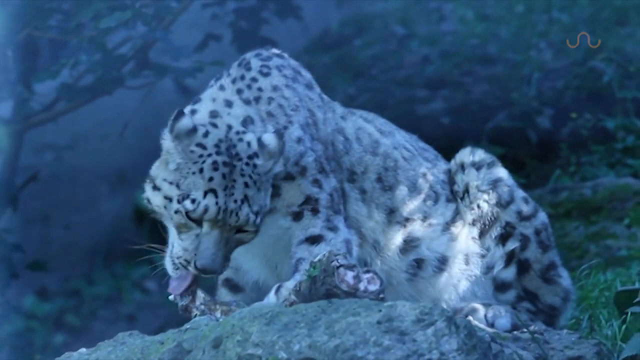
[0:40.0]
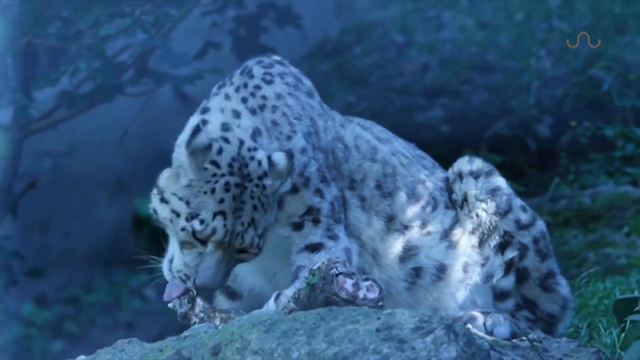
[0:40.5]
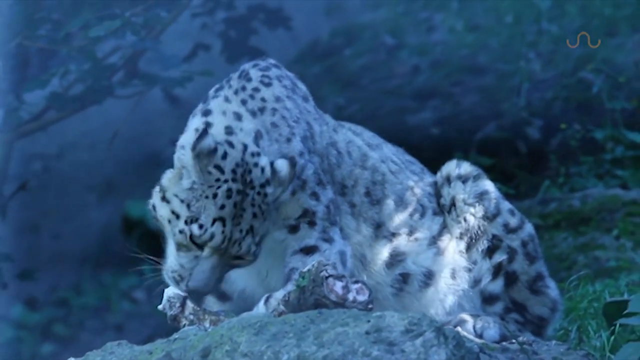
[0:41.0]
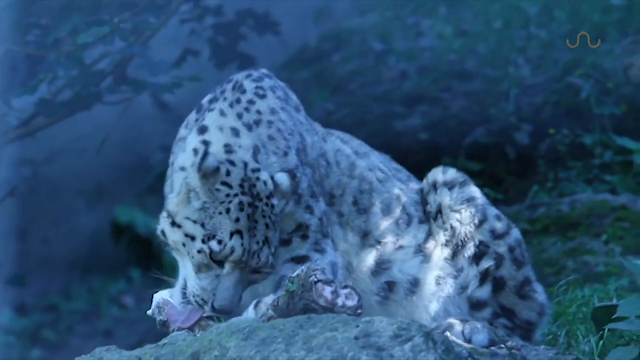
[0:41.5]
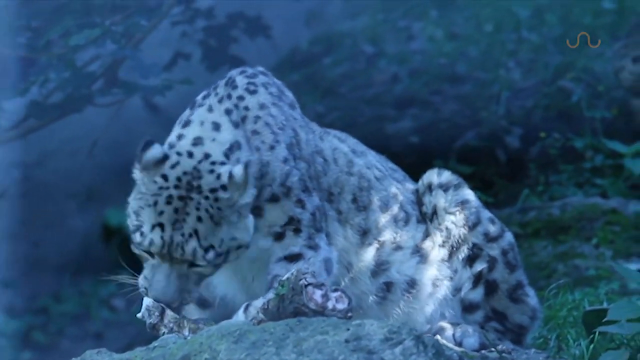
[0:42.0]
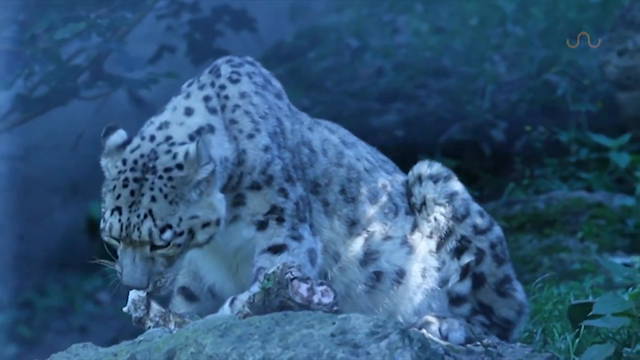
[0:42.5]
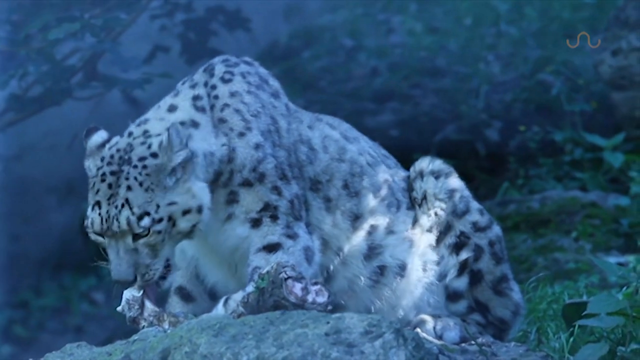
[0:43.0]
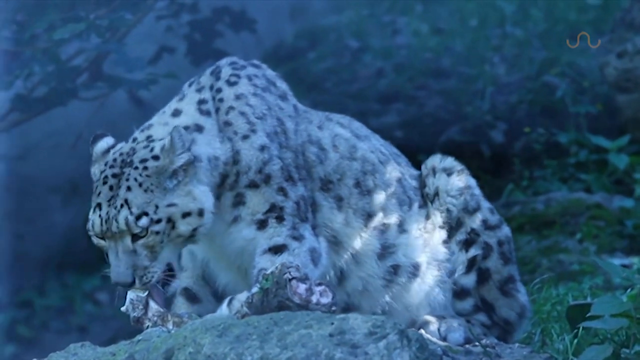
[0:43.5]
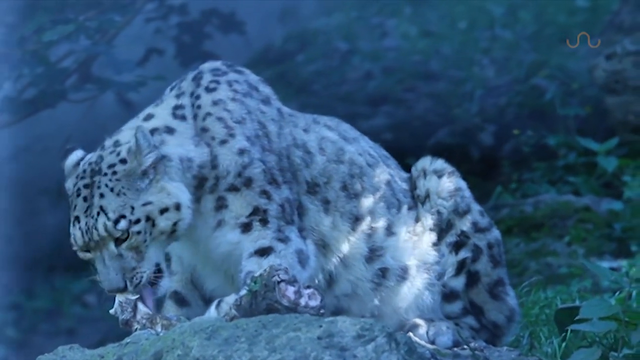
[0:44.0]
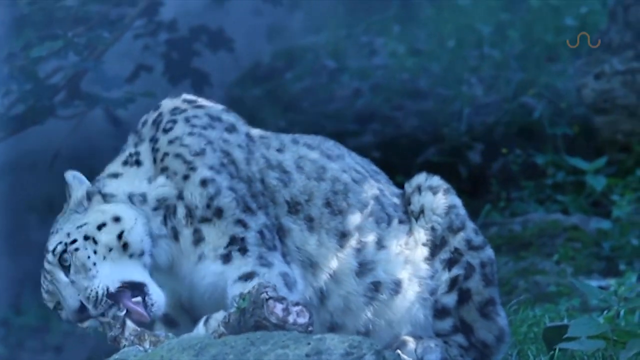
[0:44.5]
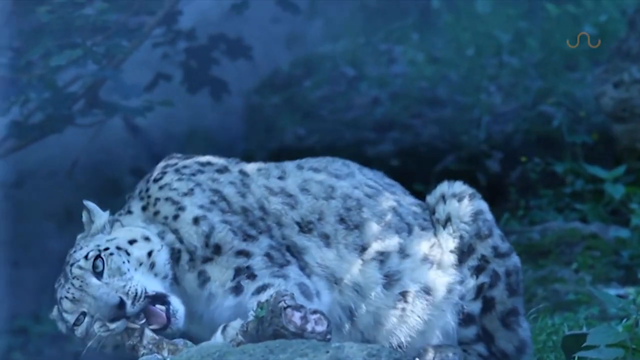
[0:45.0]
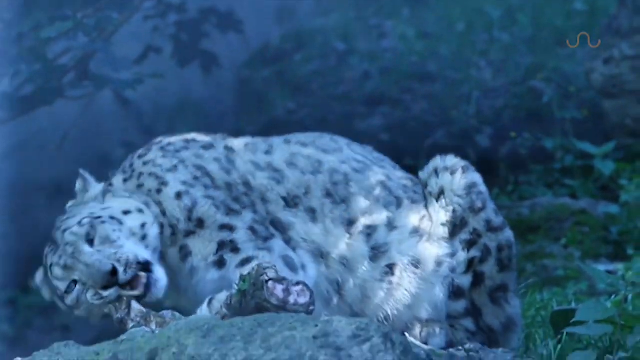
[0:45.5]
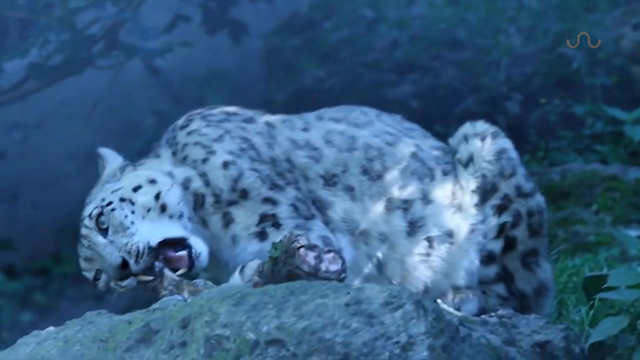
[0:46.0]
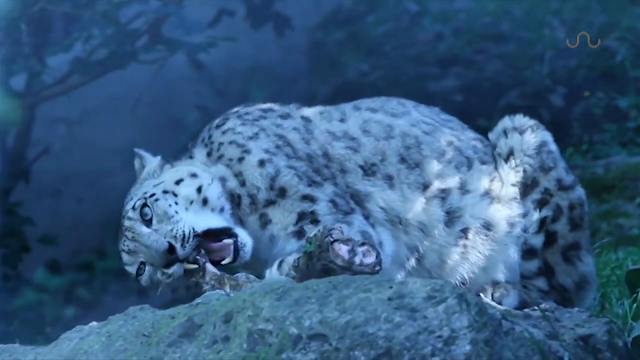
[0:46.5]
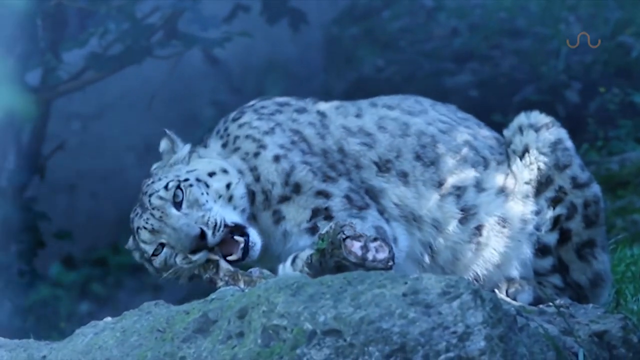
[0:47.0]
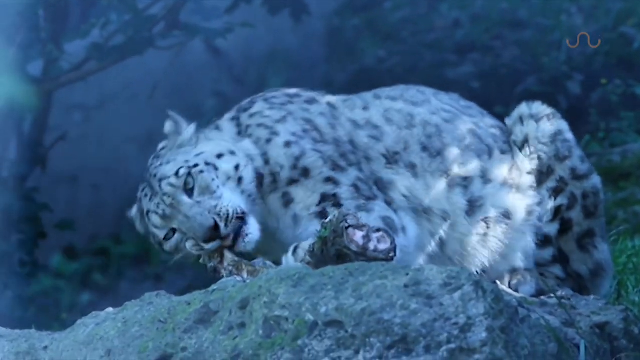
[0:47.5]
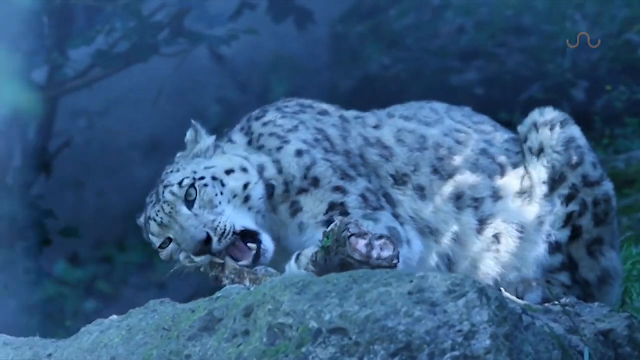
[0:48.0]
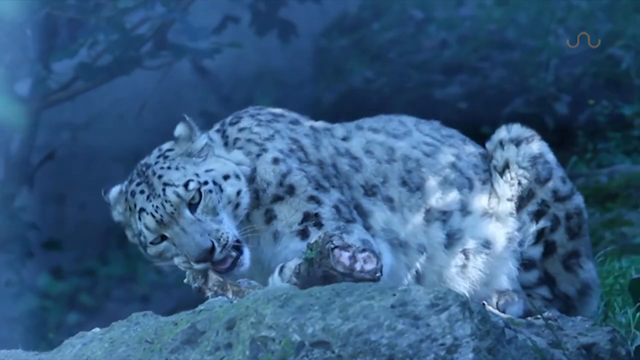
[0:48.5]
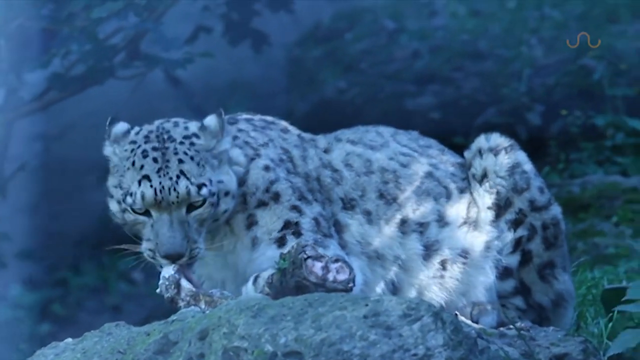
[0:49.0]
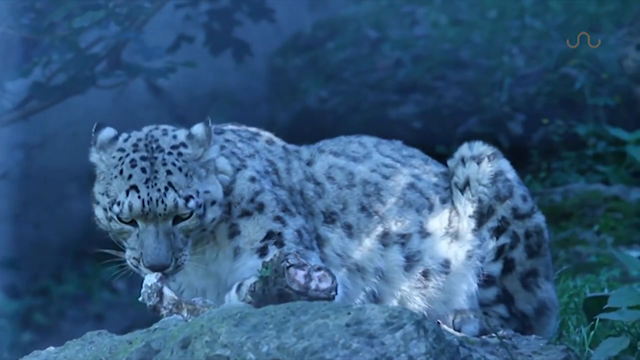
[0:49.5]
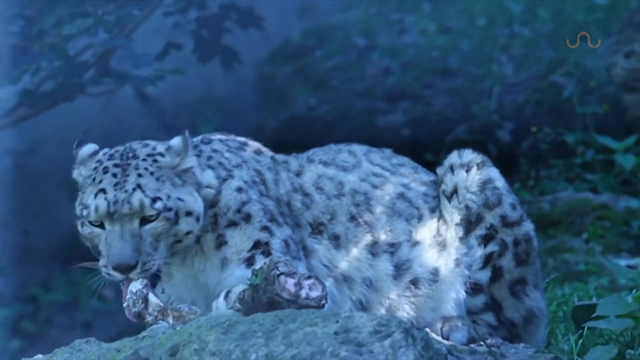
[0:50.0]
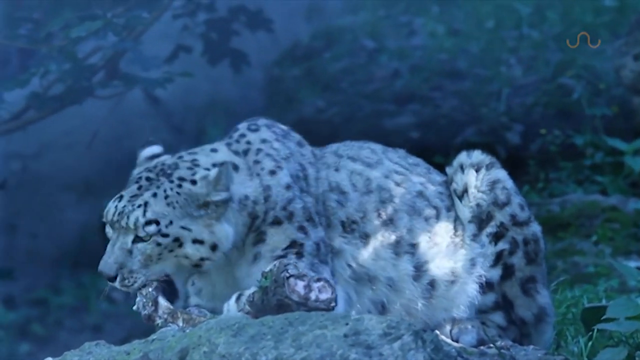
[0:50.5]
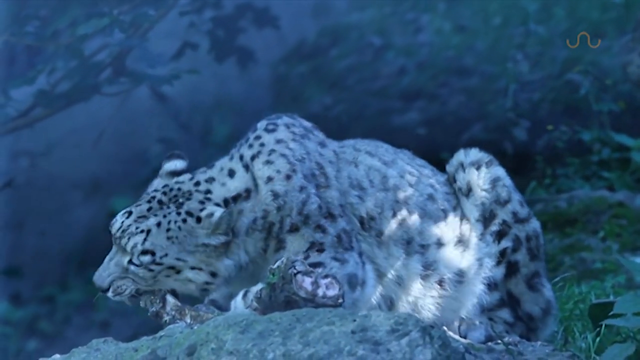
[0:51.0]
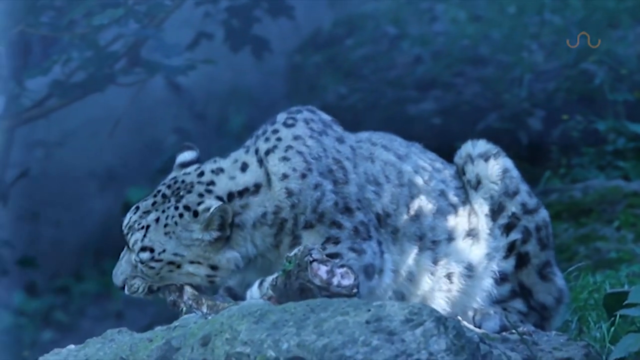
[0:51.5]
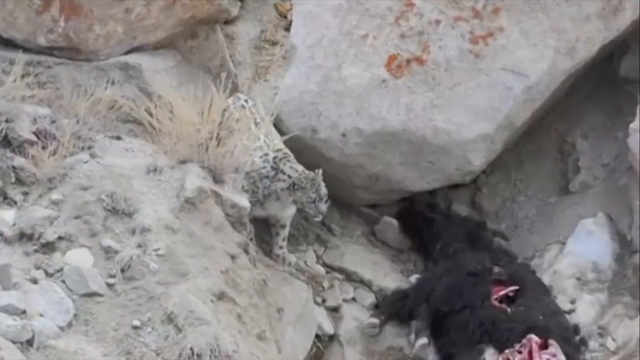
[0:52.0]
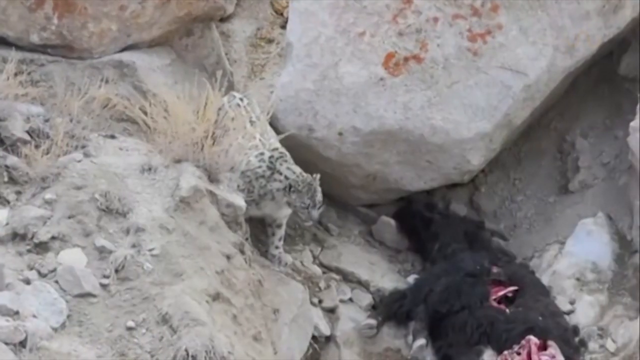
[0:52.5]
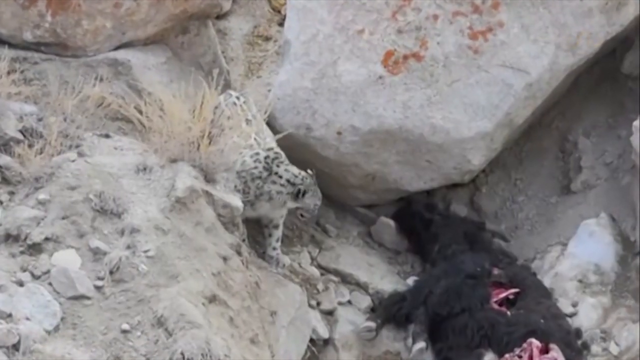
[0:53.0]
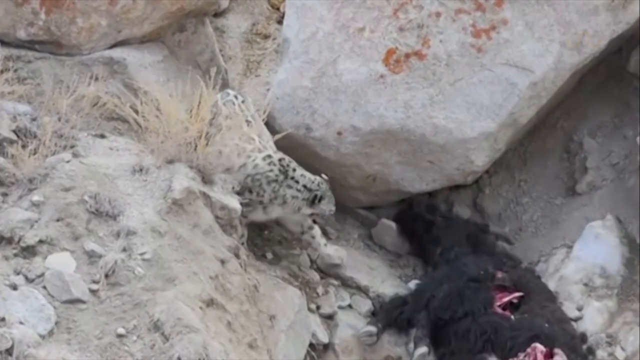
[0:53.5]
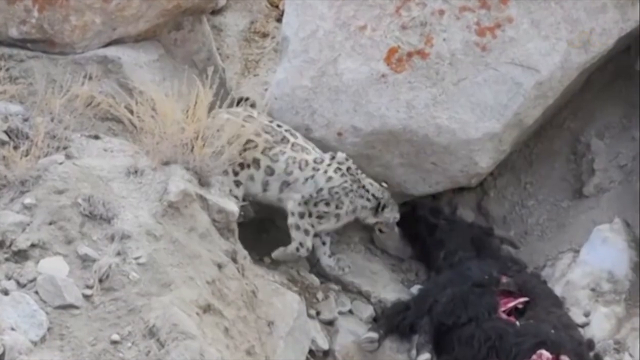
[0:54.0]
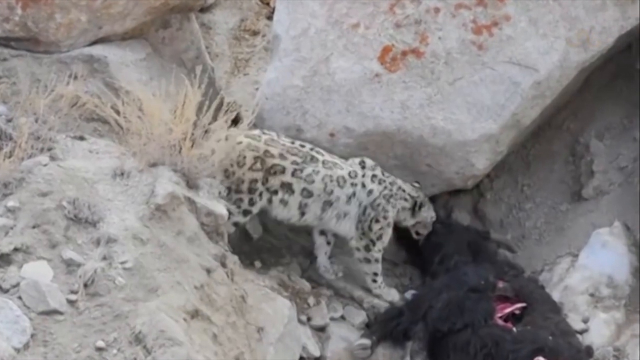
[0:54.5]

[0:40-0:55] The snow leopard eats and chews on the bone, with trees and rocks in the background. Another snow leopard appears, apparently looking at or going after the kill the other one made, probably to scavenge food from it. The video keeps cutting back to the leopard that is eating. There are apparently two leopards, and there is an animal that has been killed.